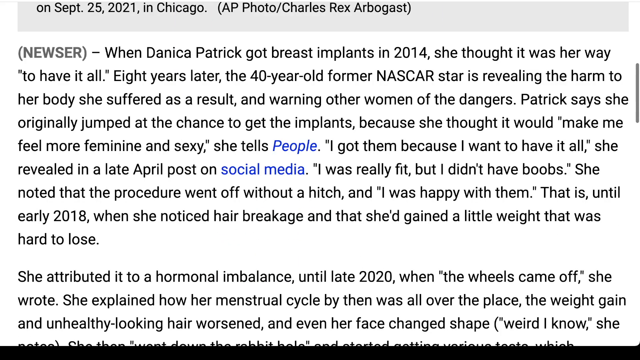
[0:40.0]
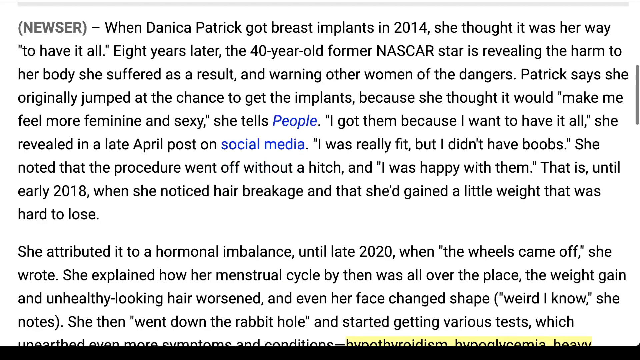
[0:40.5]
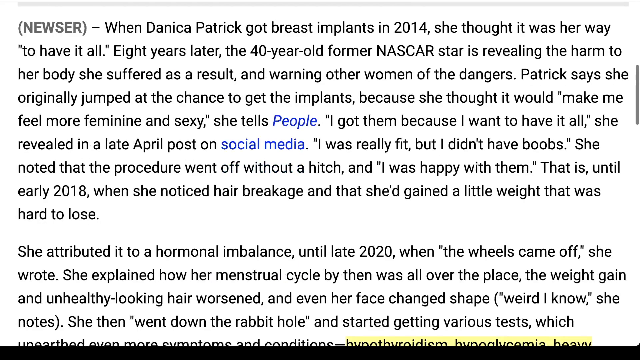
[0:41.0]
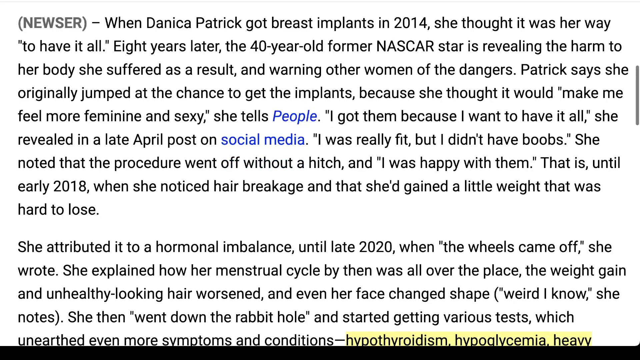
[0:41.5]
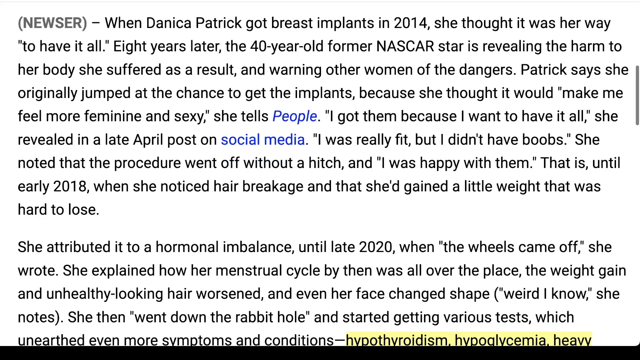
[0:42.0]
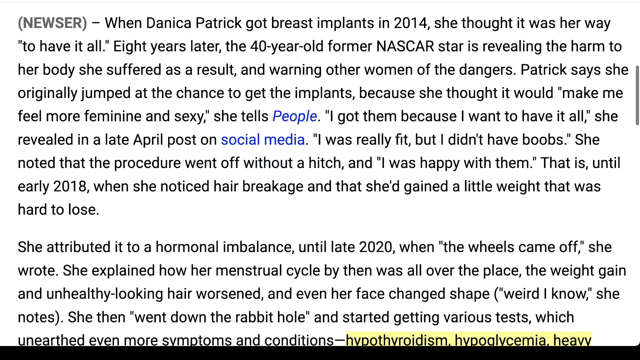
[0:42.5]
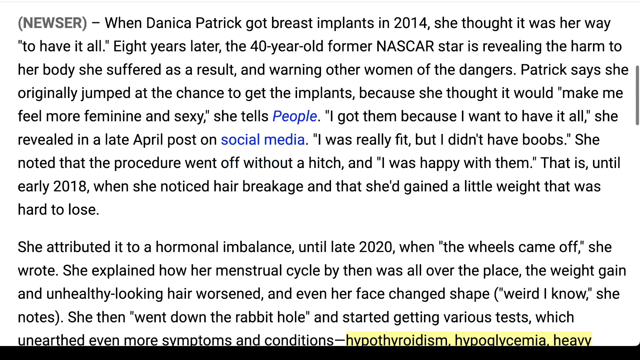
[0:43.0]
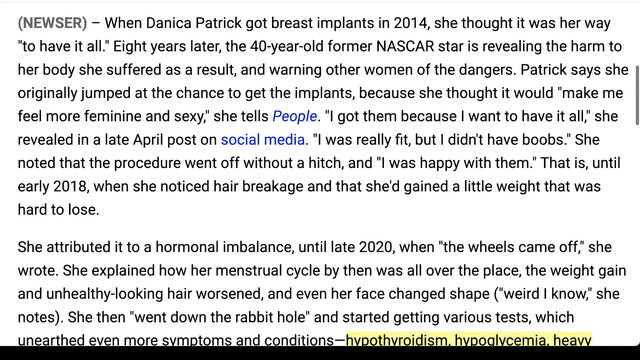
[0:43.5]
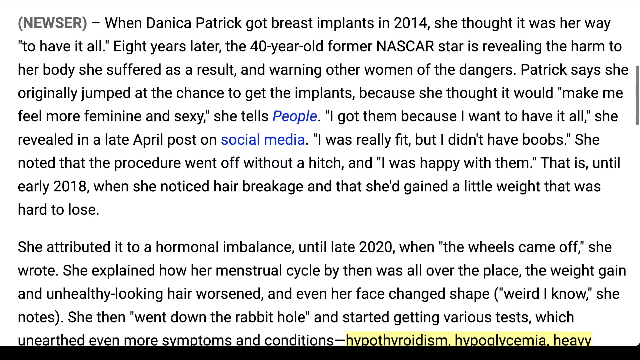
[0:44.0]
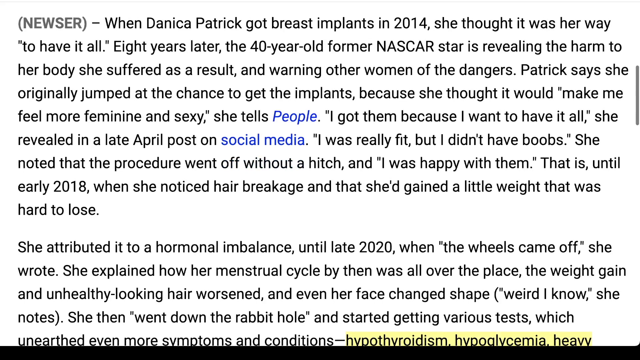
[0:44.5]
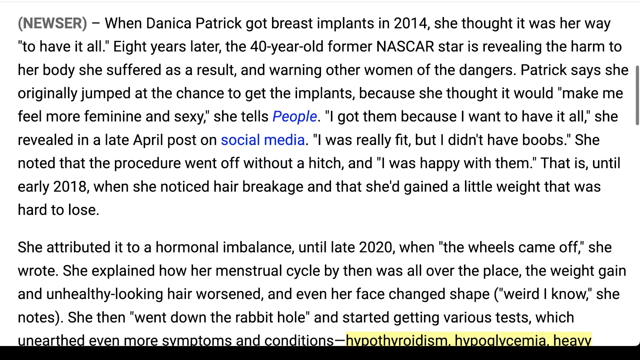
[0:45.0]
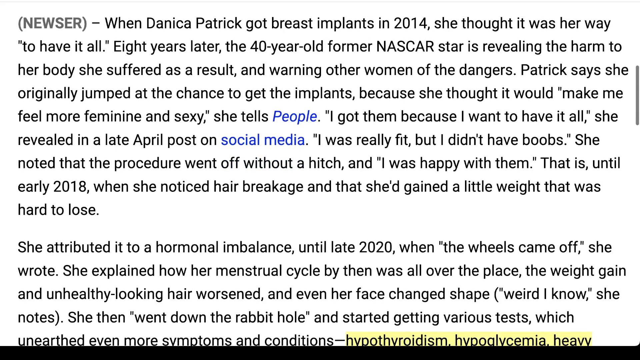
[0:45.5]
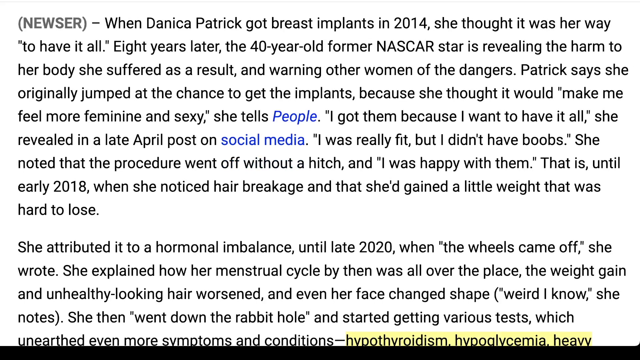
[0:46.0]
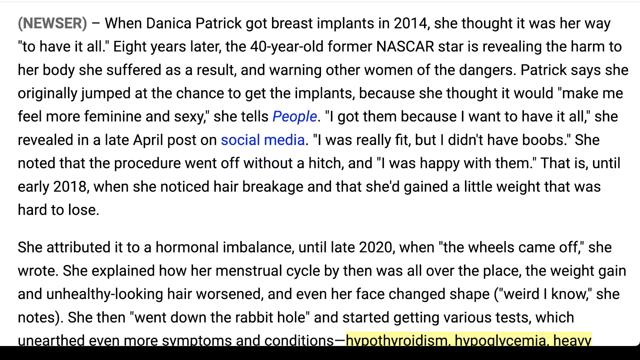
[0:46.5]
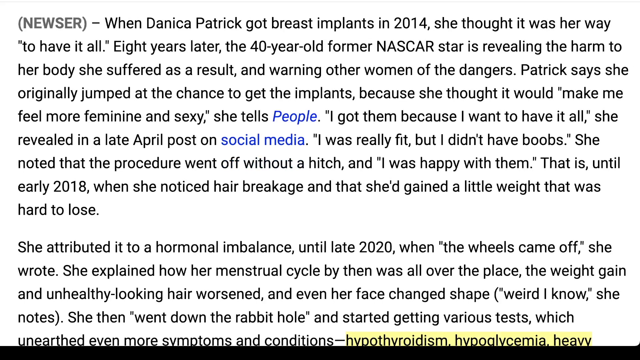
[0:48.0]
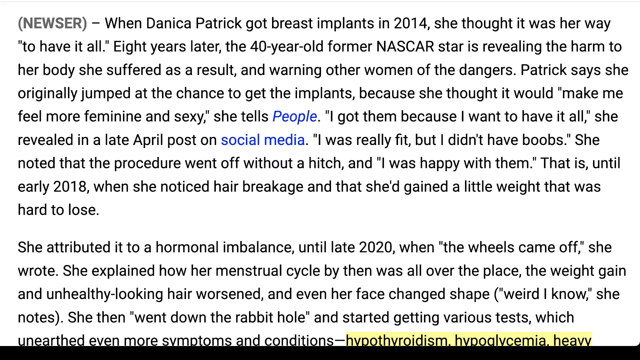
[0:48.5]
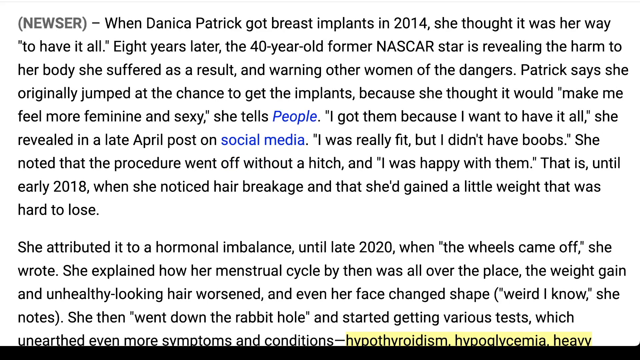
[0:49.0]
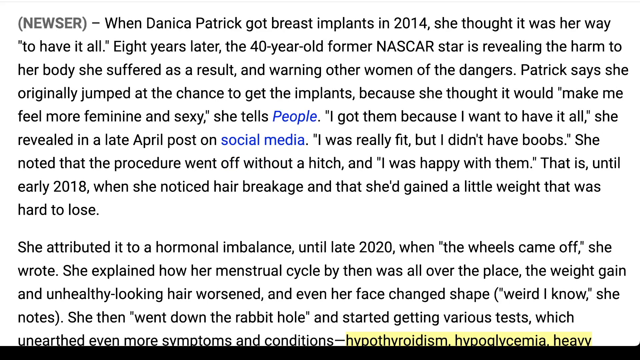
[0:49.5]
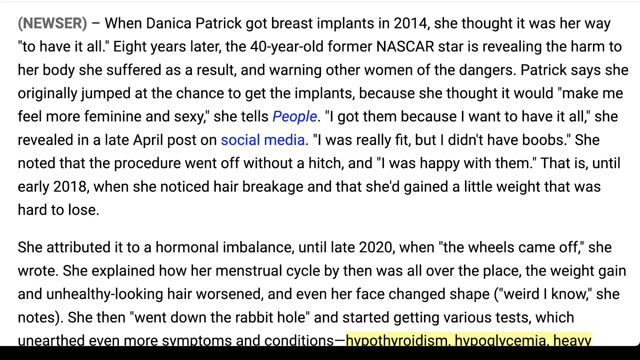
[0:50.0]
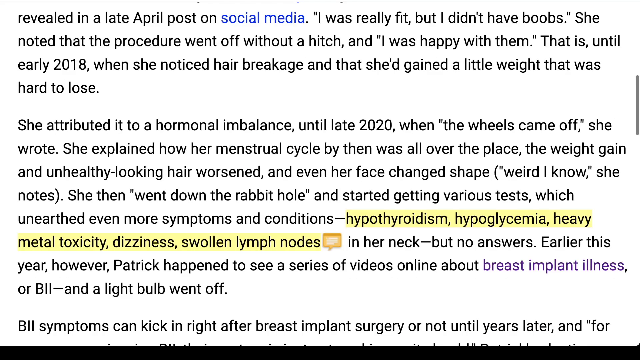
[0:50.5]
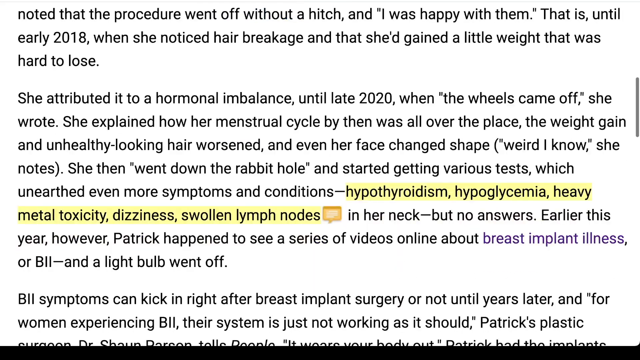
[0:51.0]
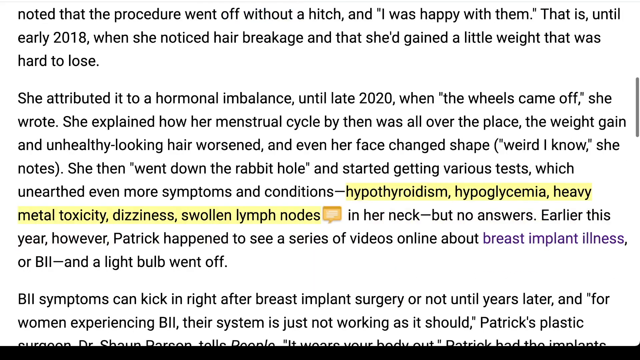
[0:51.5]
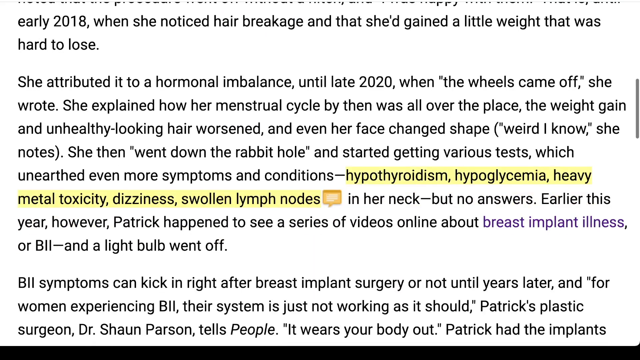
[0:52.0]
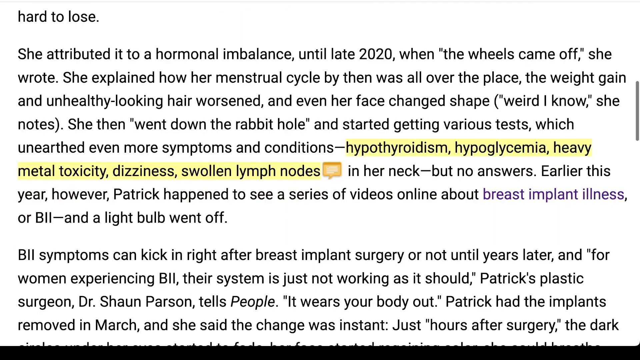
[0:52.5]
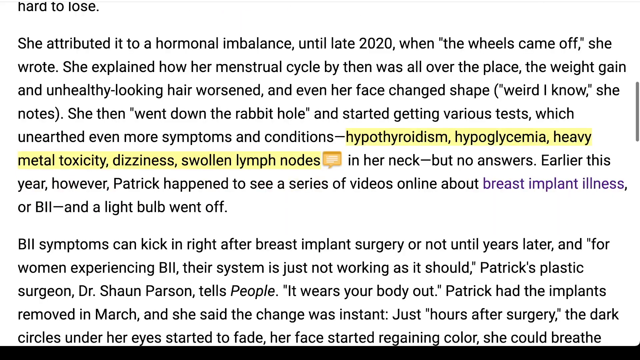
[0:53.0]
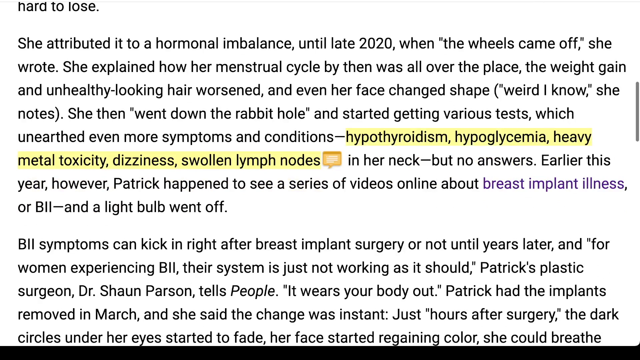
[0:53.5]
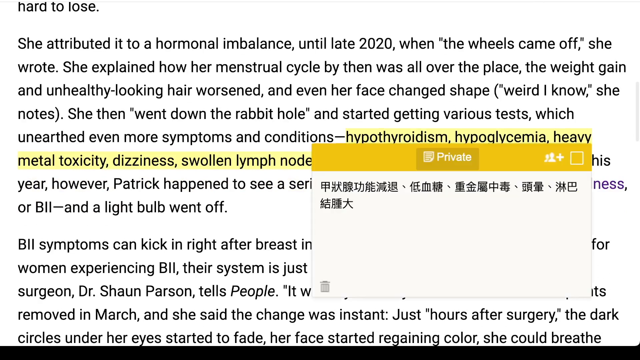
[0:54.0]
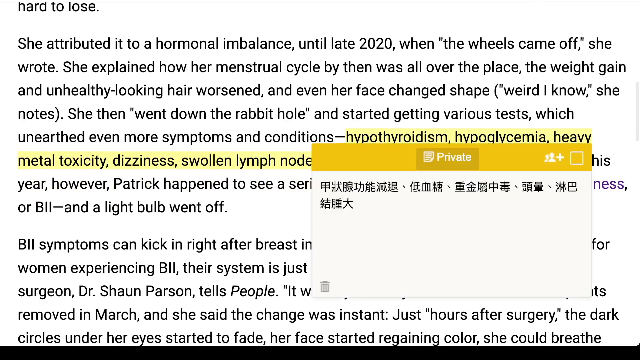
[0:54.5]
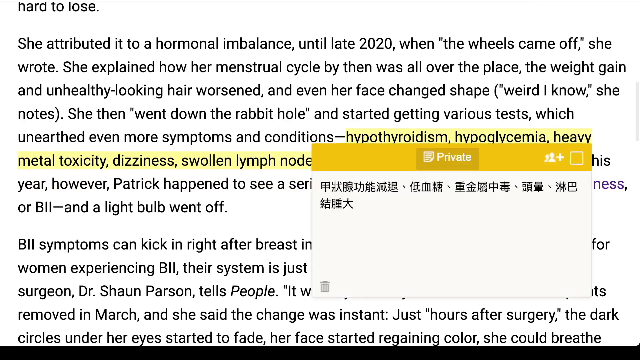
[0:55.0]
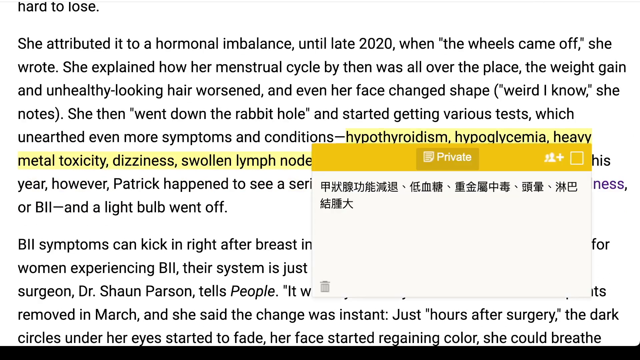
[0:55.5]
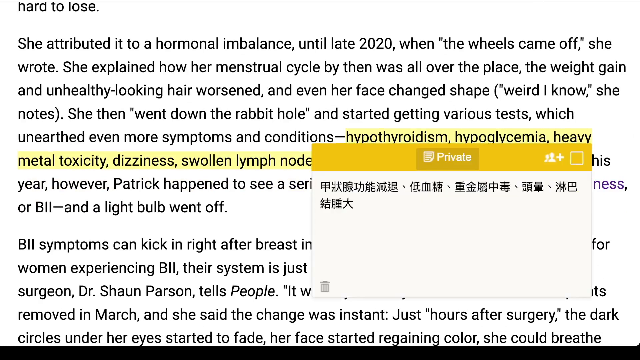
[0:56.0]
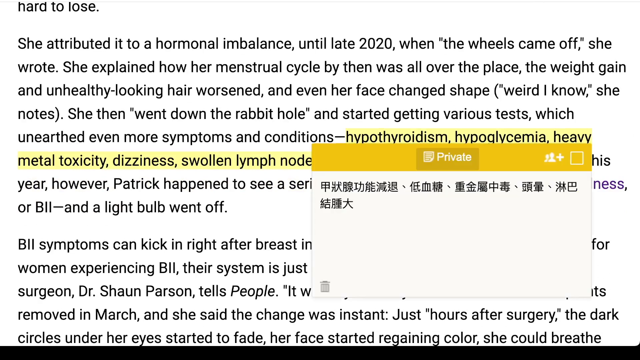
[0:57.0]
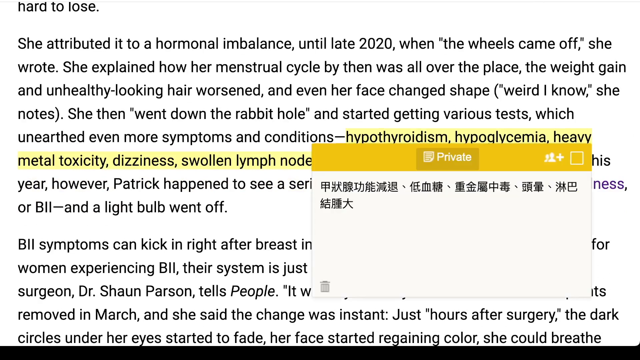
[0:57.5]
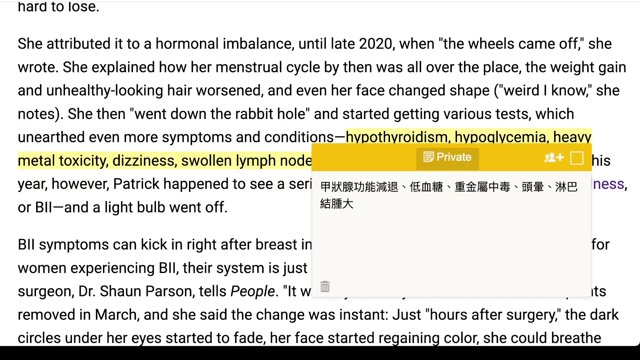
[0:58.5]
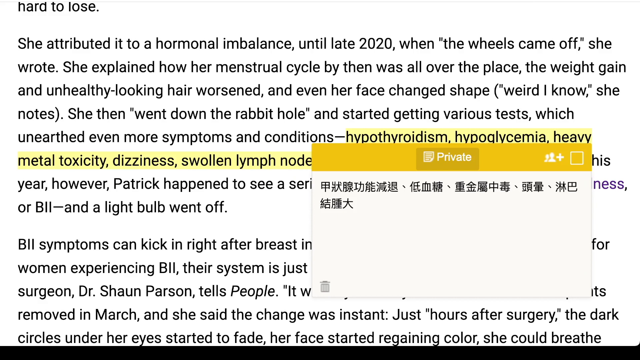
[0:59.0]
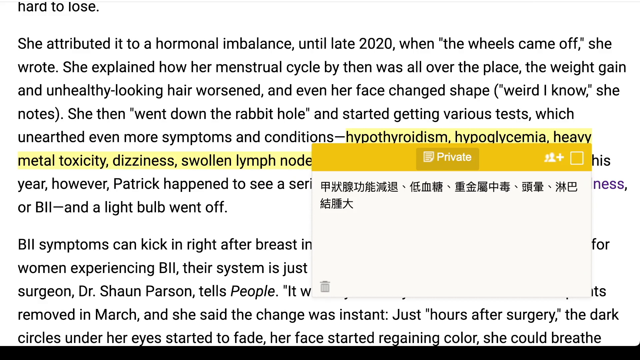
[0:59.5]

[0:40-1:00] The article scrolls down slowly. The text says she attributed it to a hormonal imbalance and that her menstrual cycle had been all over the place. Further down, a list of items is highlighted in yellow: hypothyroidism, hypoglycemia, heavy metal toxicity, dizziness, lymph nodes and others. A small pop-up box then appears briefly, with "private" at the top, apparently a private chat, possibly from someone messaging the person while they read the article. It contains Asian characters, apparently Chinese, and there is no response. The chat menu looks like a typical chat menu, with a comment box and a trash can.